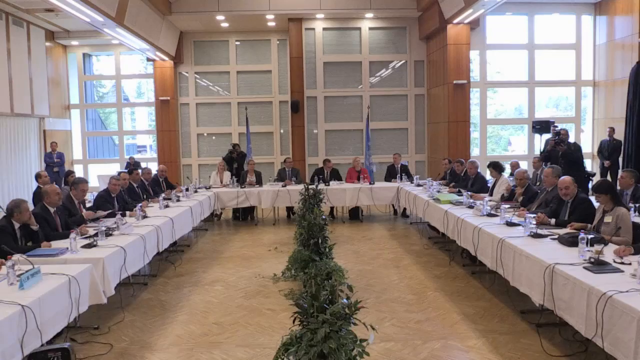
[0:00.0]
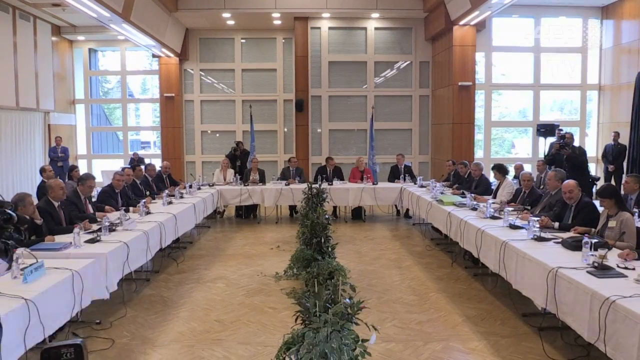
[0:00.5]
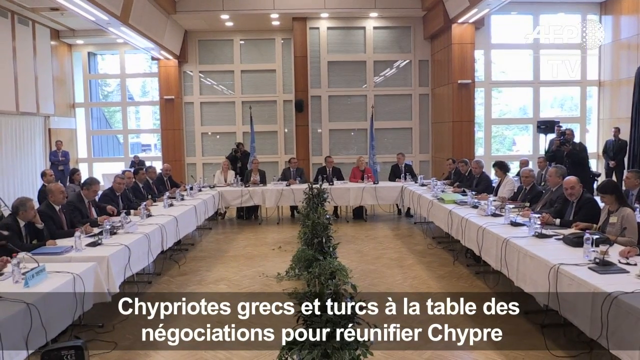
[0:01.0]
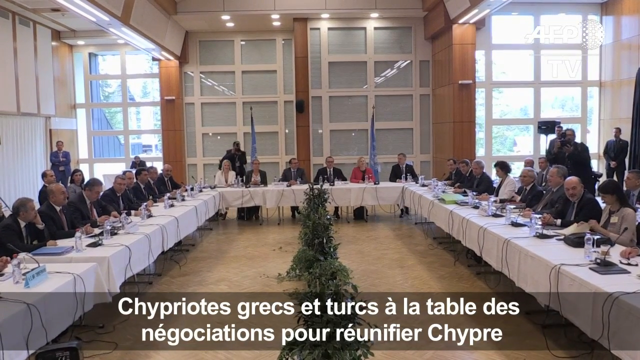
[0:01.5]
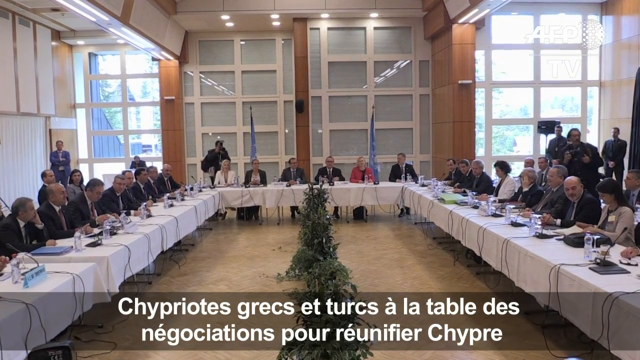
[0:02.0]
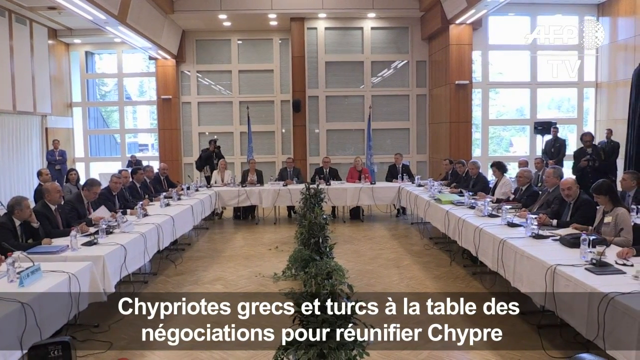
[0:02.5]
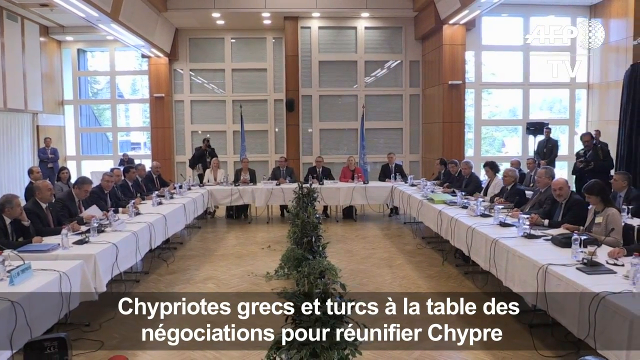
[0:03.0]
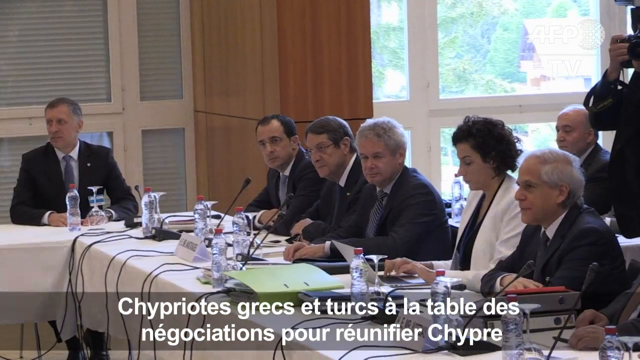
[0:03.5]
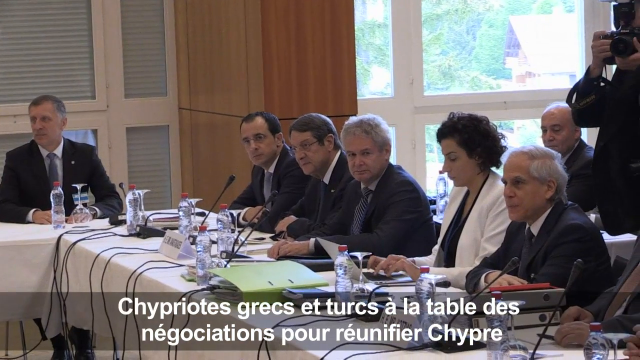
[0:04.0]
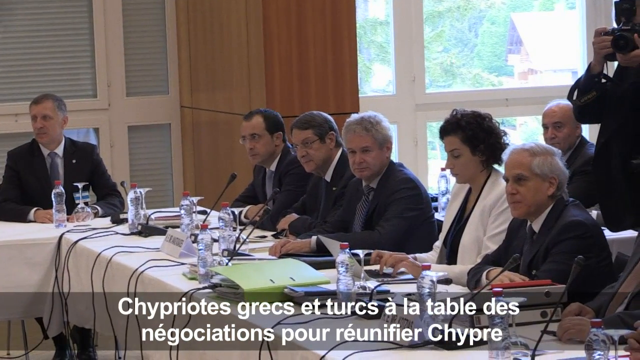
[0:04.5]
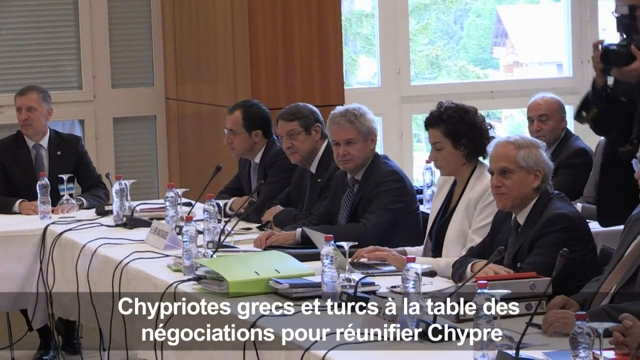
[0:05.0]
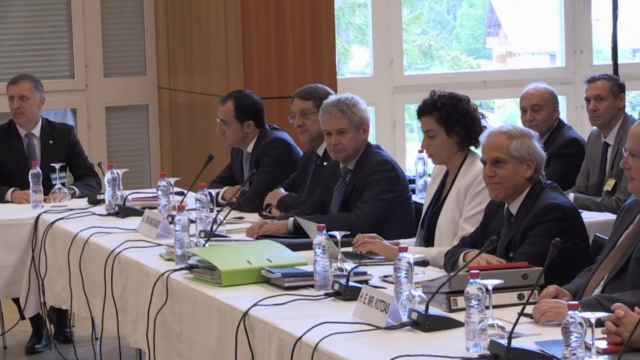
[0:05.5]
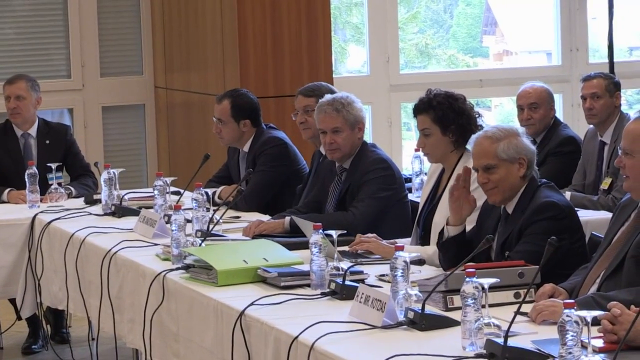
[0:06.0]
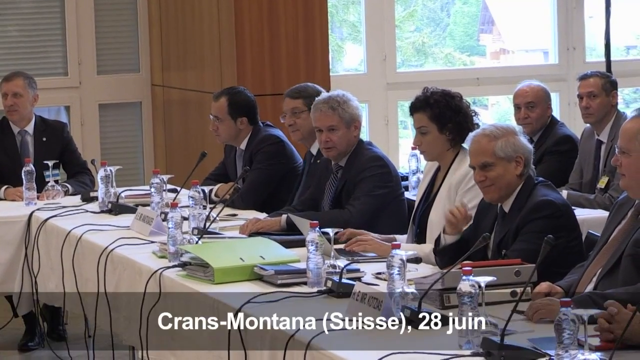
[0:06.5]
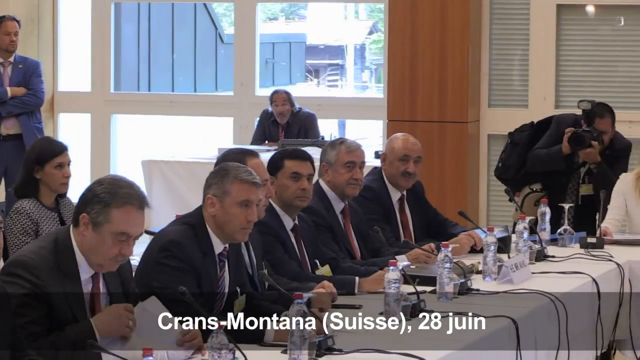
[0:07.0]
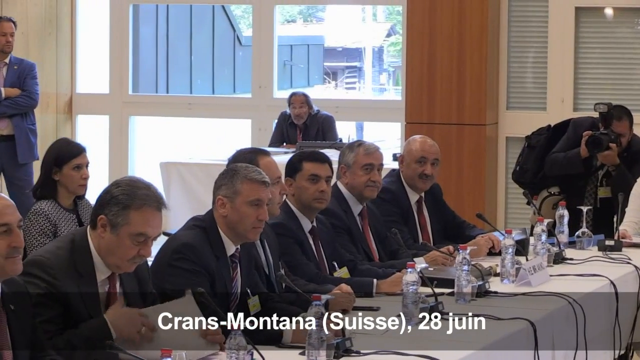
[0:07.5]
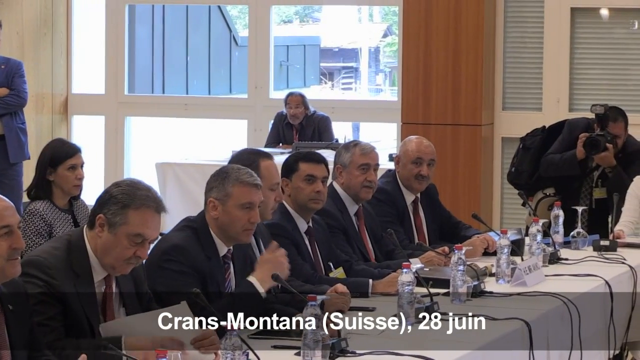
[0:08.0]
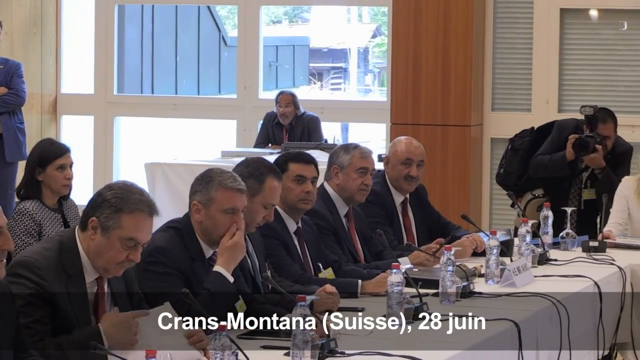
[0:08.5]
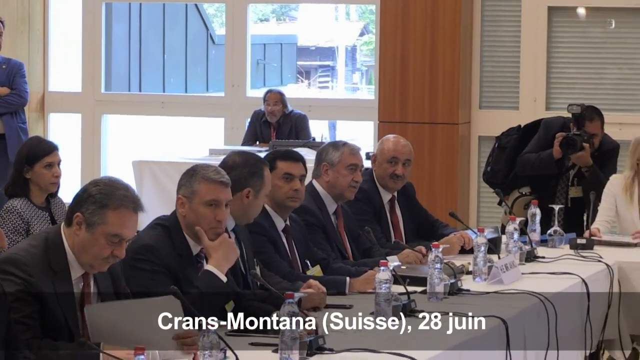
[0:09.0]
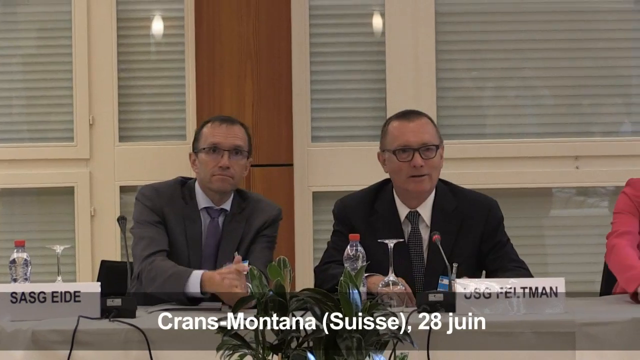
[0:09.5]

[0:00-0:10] A news story opens with diplomats or business leaders seated around tables arranged in a big U. About 30 people are in the picture, all wearing suits; they are mostly white men, with four or five women. In front of them are what appear to be translating devices, black boxes on cords, suggesting some sort of diplomatic summit. The very large conference room has floor-to-ceiling glass windows at the back. Six people are seated at the top of the U and 12 or so on each side, and a number of journalists and camera people stand behind those seated at the conference tables. The first shot is a wide view facing towards the end of the U. Next, a man in a dark suit gives a little salute to someone across the open space, and then that man nods his head. A photographer with a large camera moves into view, leaning forward to take a photo of someone. The final shot shows two men in dark business suits facing the camera, one of them moving his hand.